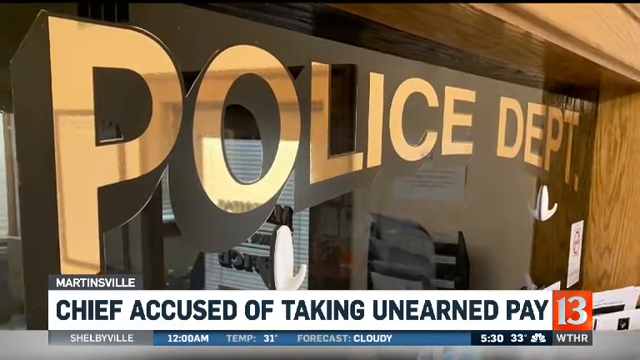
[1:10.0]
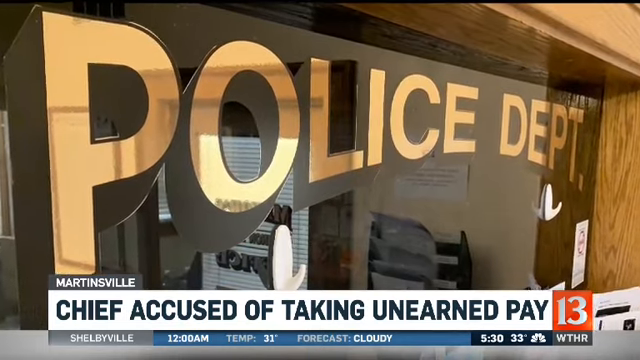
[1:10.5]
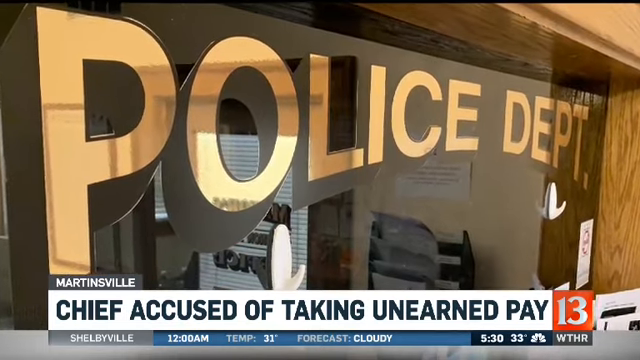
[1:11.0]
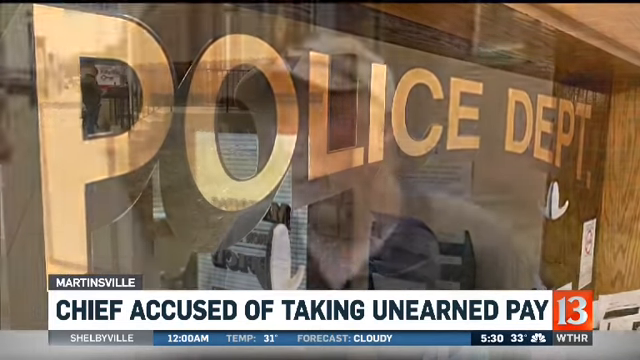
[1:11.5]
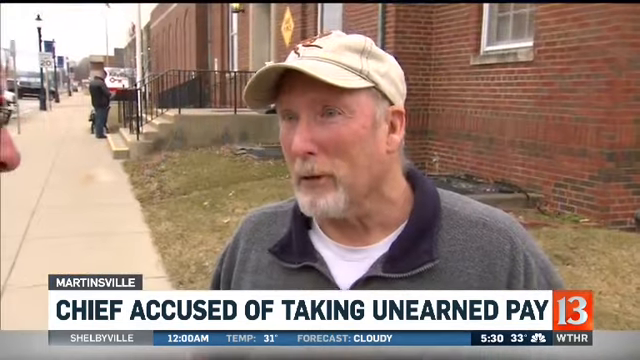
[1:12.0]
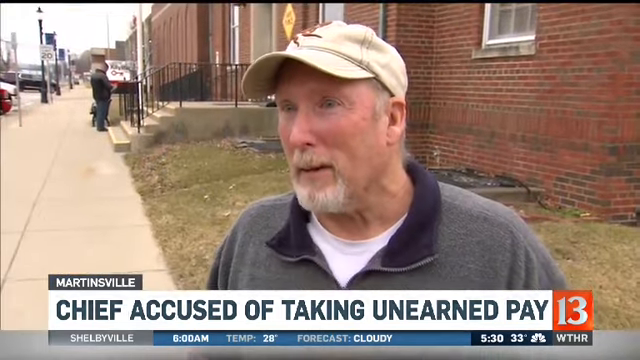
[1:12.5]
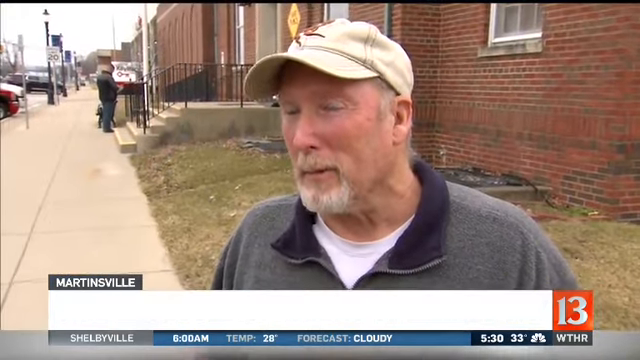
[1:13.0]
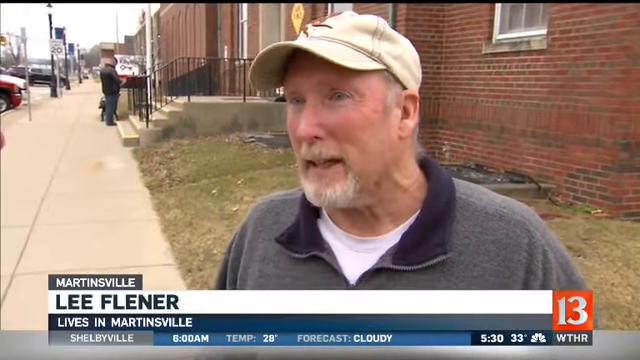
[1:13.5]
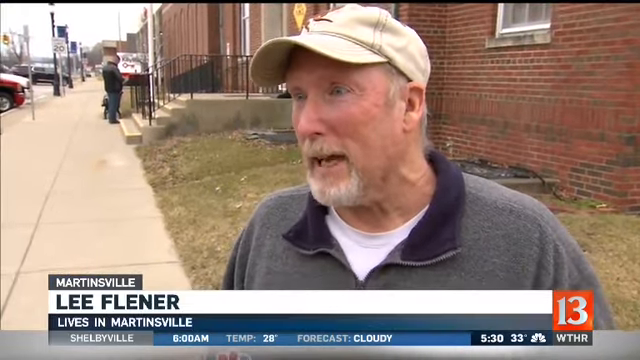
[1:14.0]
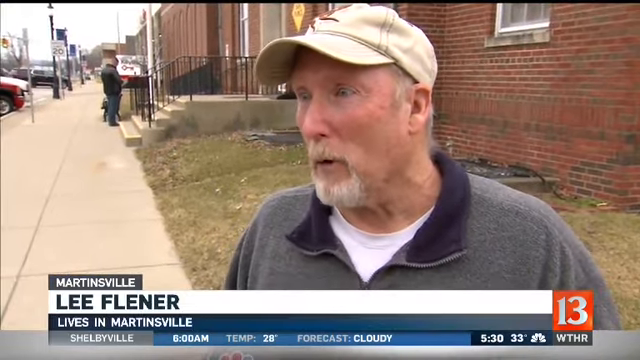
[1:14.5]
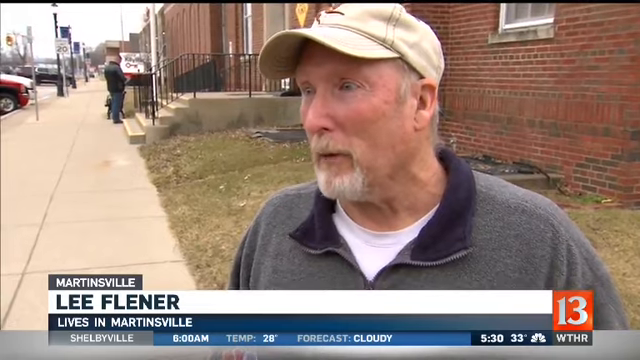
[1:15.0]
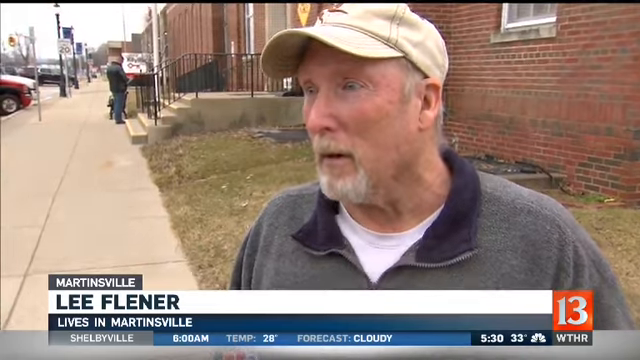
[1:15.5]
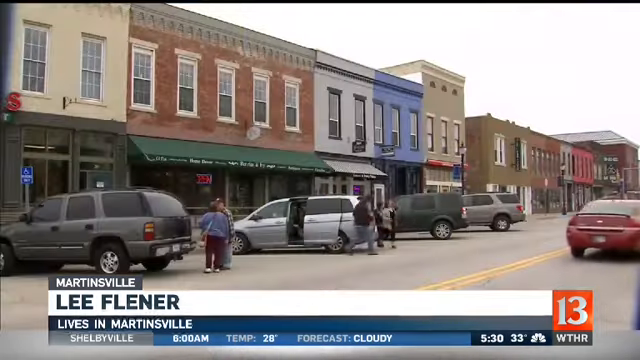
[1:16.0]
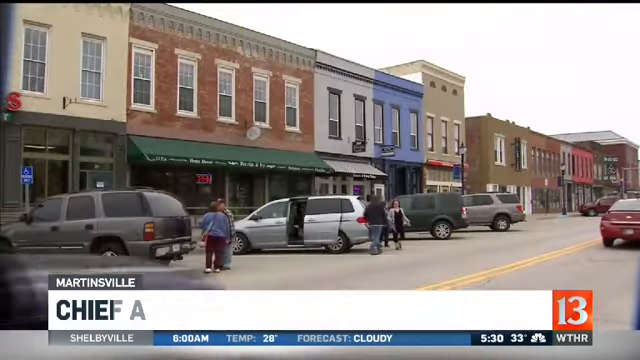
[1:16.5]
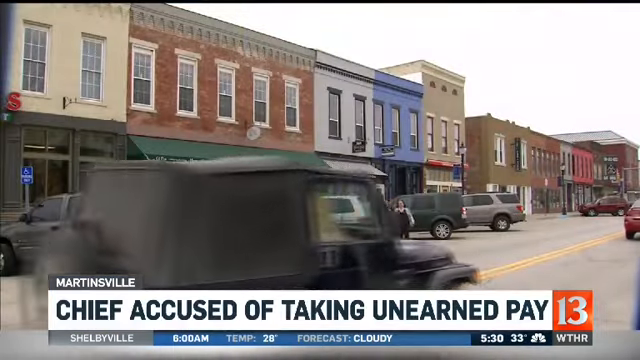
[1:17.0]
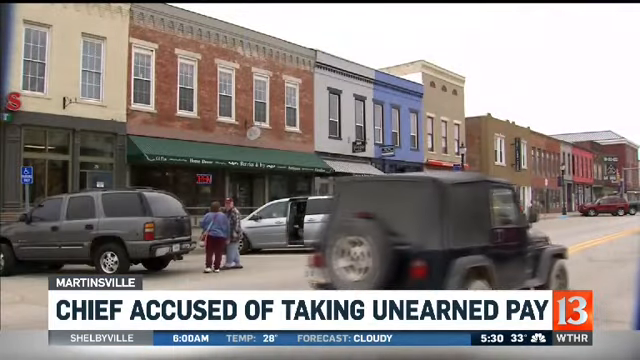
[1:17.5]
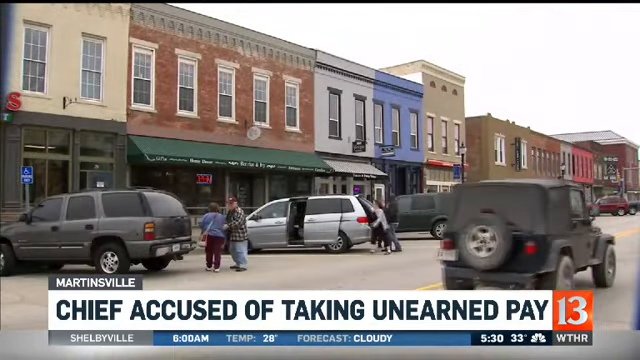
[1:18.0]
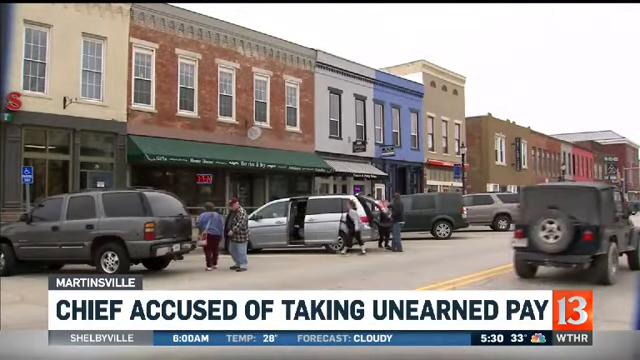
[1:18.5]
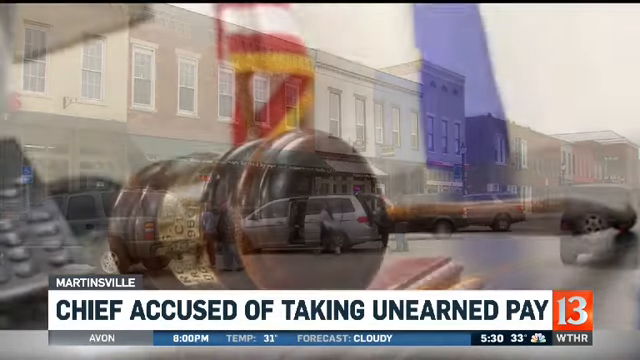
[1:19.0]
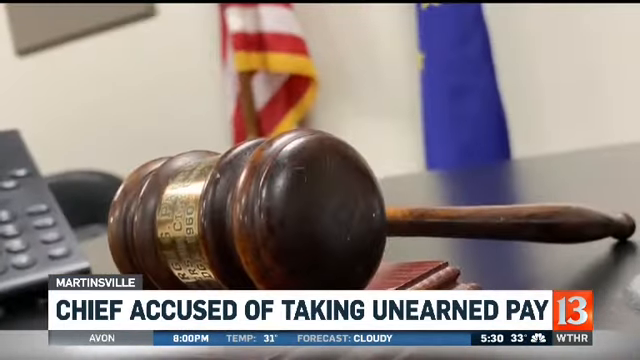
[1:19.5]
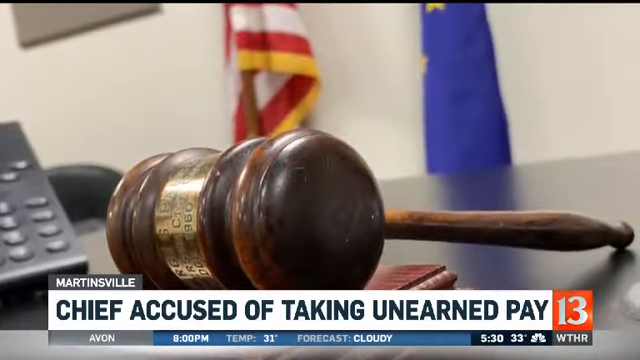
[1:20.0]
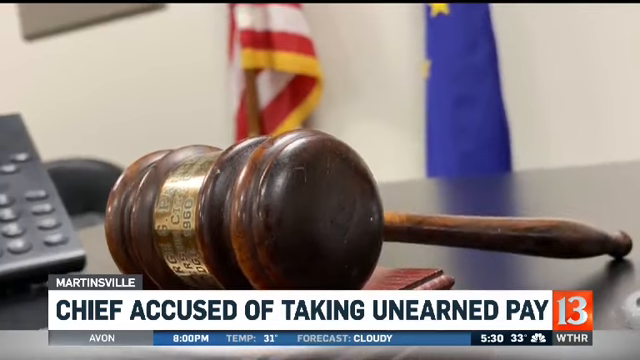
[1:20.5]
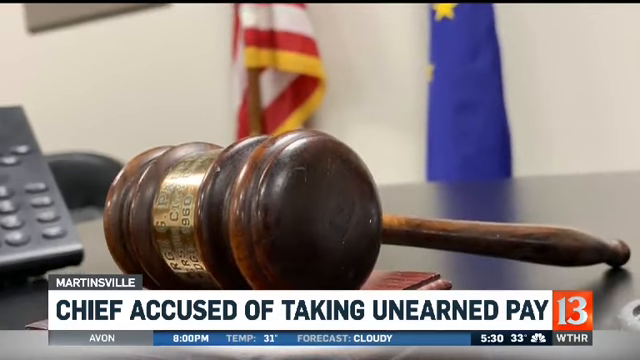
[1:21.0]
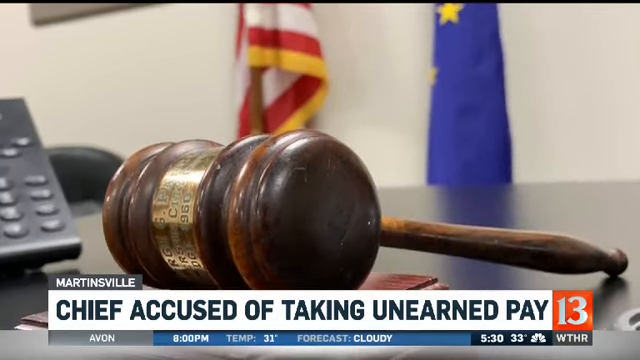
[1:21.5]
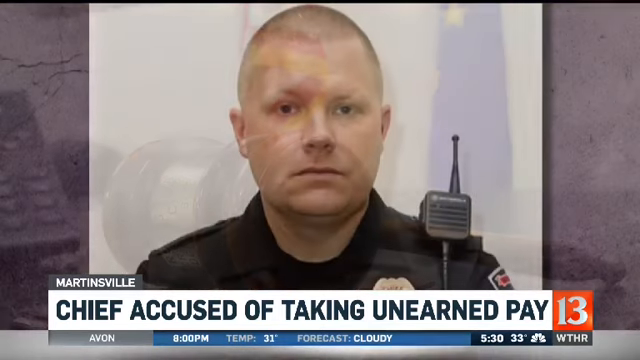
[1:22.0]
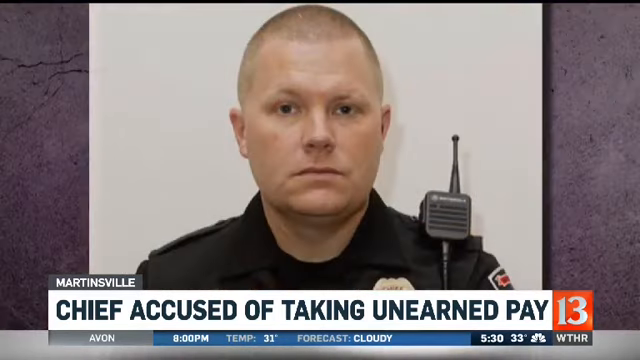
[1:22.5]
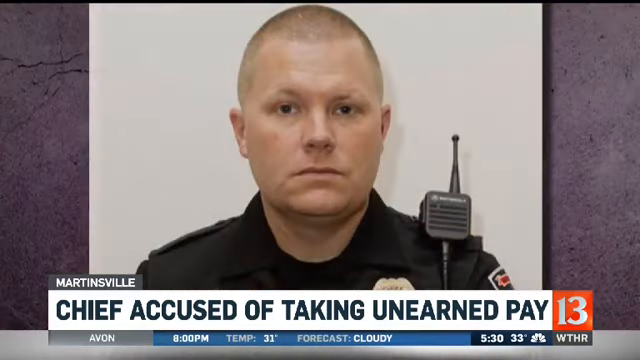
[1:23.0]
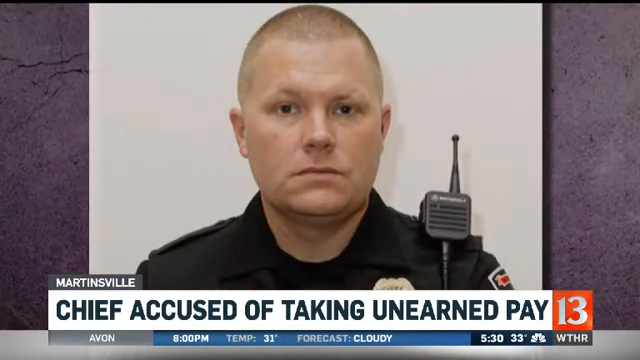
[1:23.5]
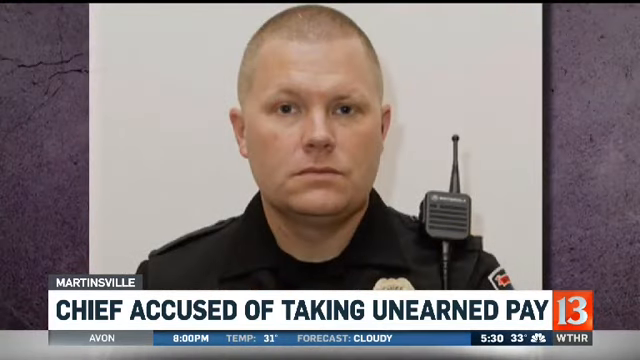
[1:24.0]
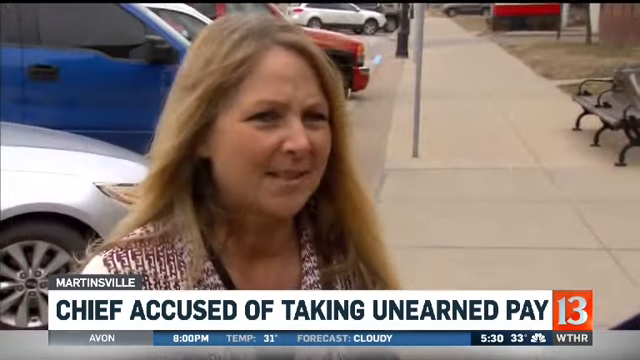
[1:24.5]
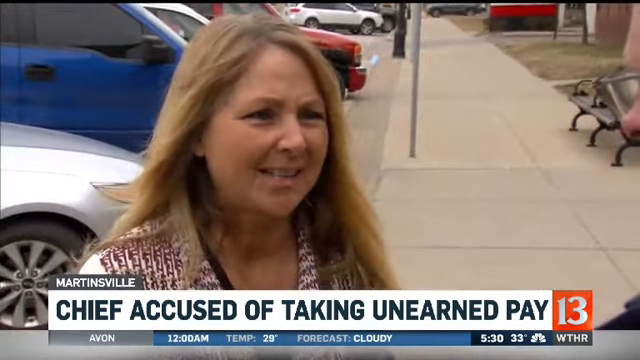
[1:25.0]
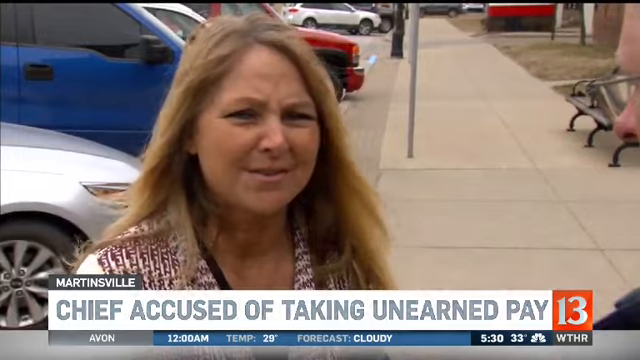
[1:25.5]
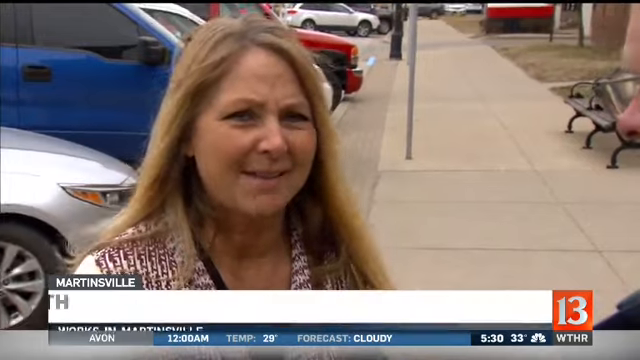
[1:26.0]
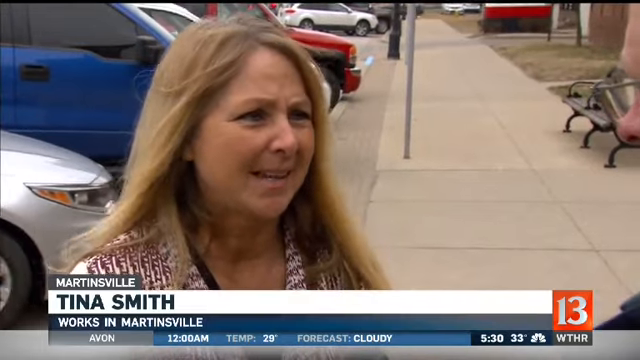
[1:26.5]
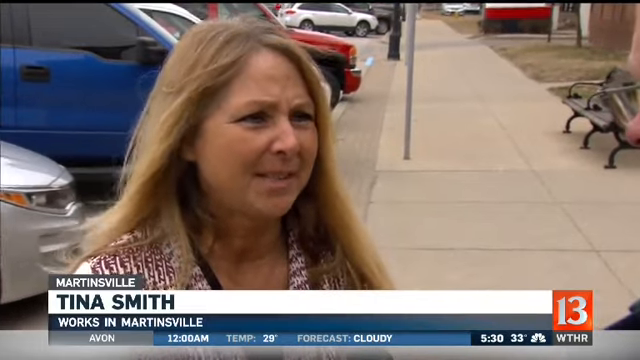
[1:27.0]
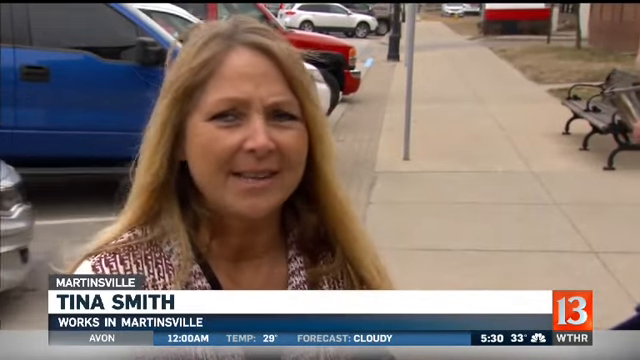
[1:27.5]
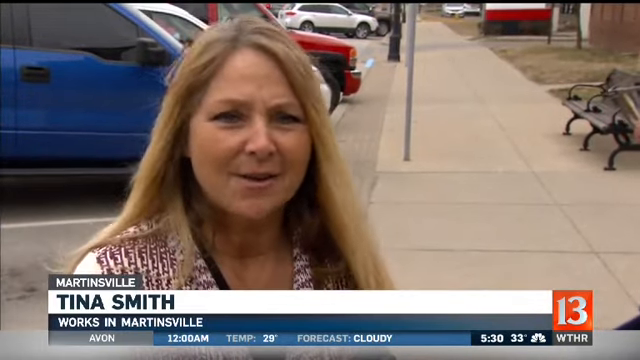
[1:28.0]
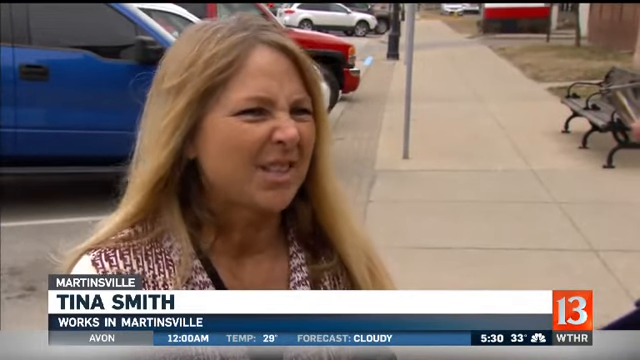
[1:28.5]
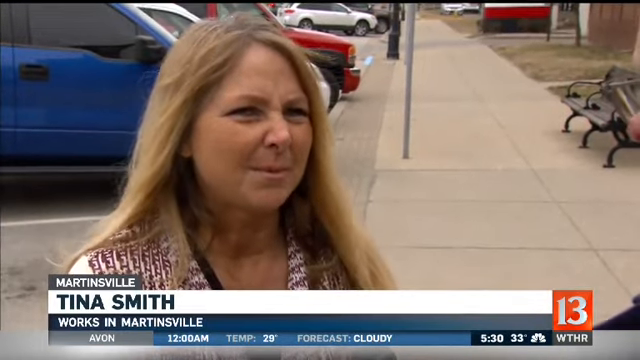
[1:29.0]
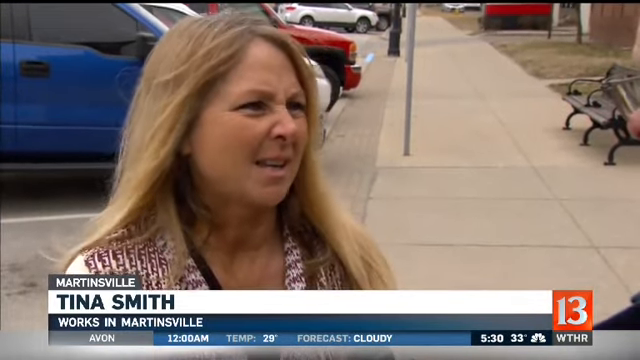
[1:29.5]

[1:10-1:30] The police department shot pans slightly to the right, and then the video cuts to an interview with a man named Lee Flenner; the text says he lives in Martinsville. He looks toward the left side of the screen rather than at the camera, talking to someone to the left of the camera, probably the interviewer. The video then cuts to b-roll footage of cars driving in a parking lot, followed by a close-up picture of a judge's gavel right up front. On the left-hand side a phone is barely visible. Behind the gavel is a flag with yellow, red, and white stripes and more red stripes, and to the right of that is another flag with a blue background and yellow stars, two of which are visible. The video cuts again to the police officer's mugshot, and then to an interview with a woman facing the right-hand side of the screen, named Tina Smith. She kind of nods and shakes her head as she talks to the interviewer, with almost an expression of disgust.